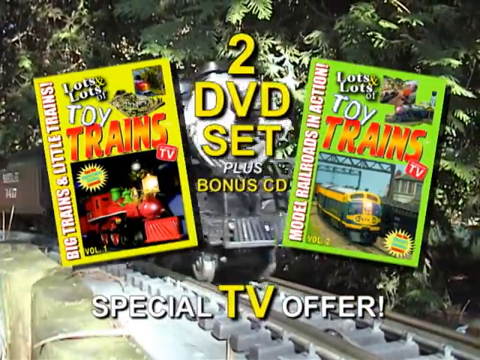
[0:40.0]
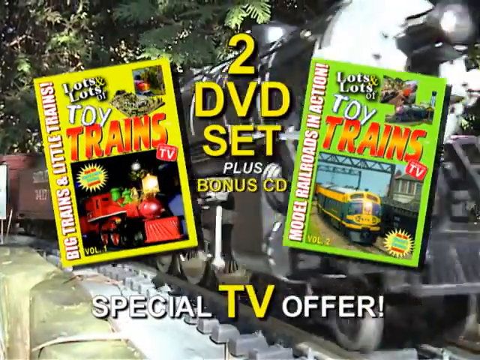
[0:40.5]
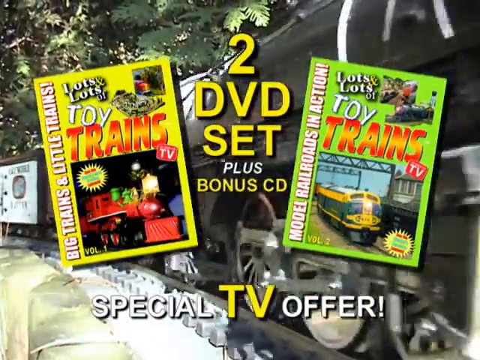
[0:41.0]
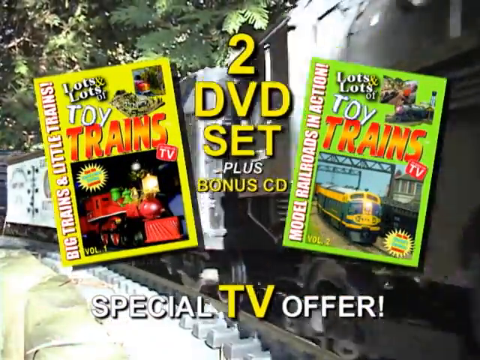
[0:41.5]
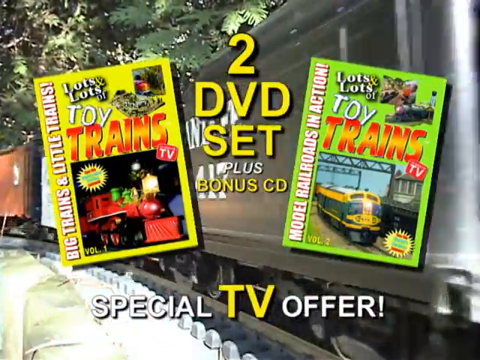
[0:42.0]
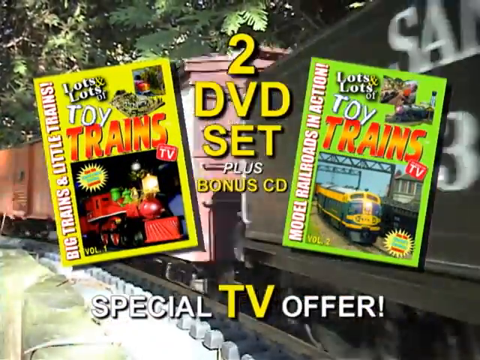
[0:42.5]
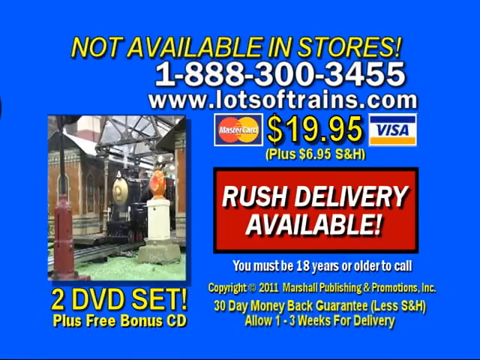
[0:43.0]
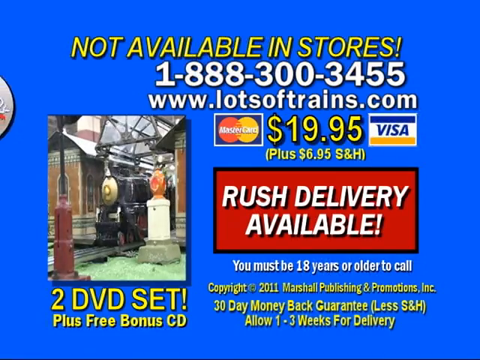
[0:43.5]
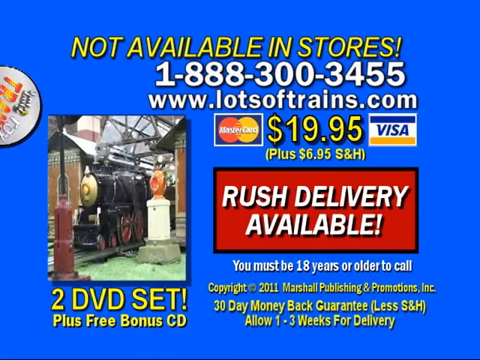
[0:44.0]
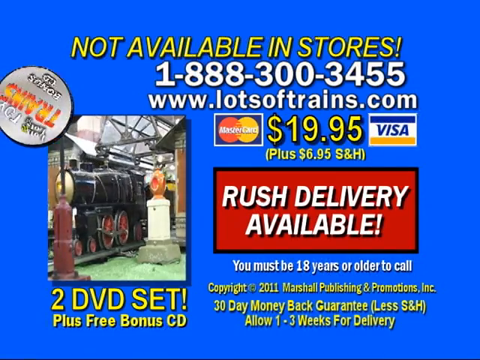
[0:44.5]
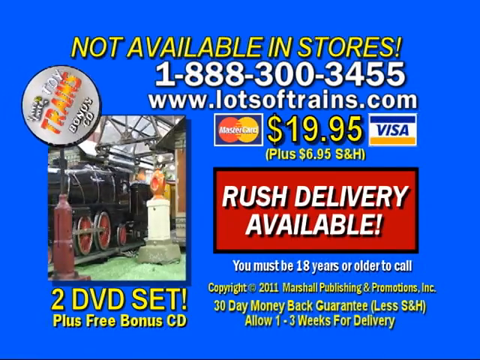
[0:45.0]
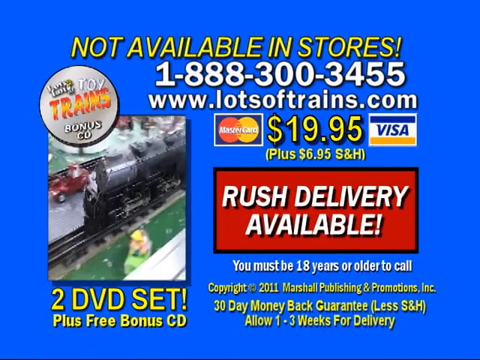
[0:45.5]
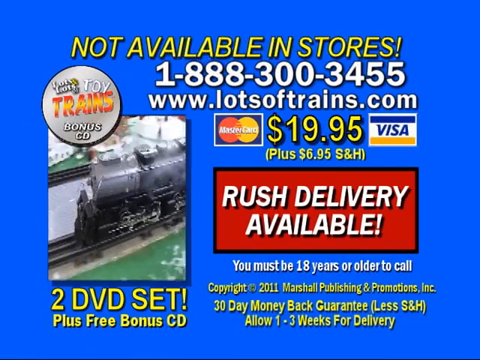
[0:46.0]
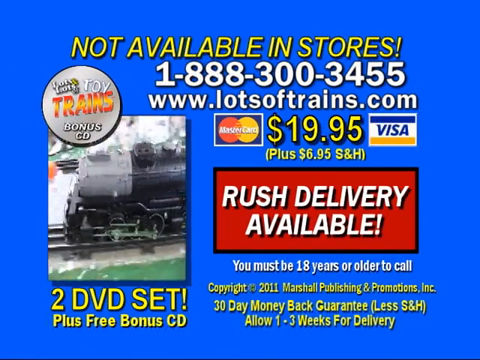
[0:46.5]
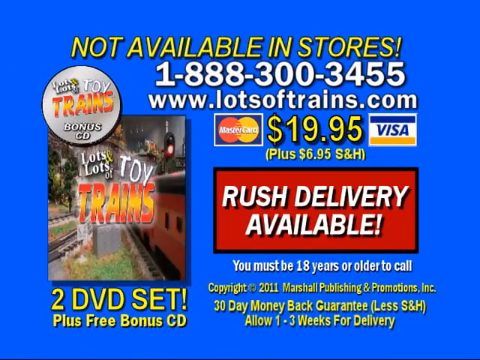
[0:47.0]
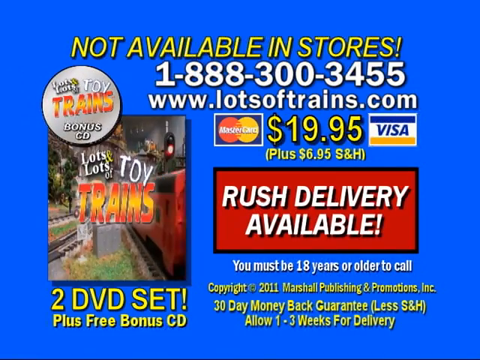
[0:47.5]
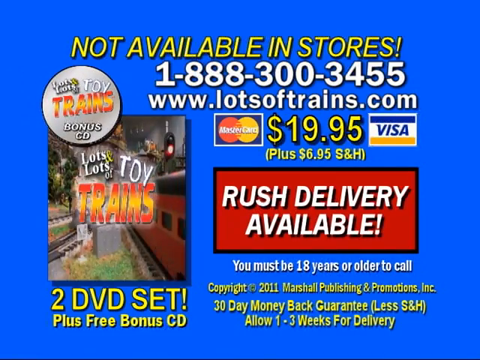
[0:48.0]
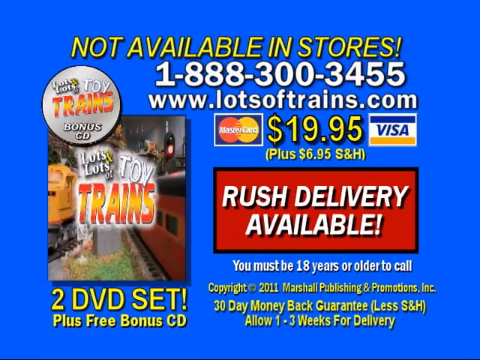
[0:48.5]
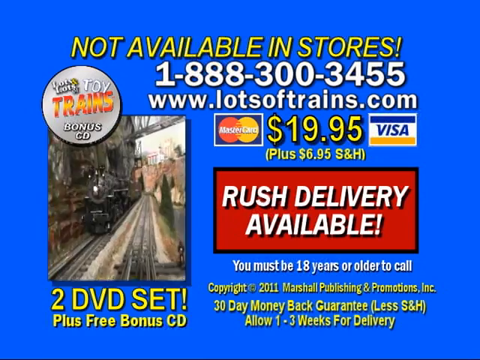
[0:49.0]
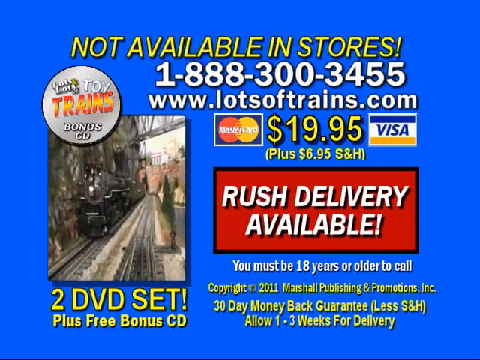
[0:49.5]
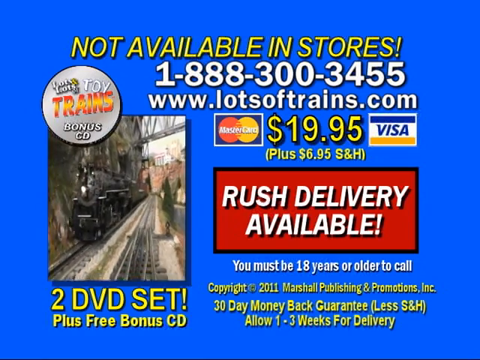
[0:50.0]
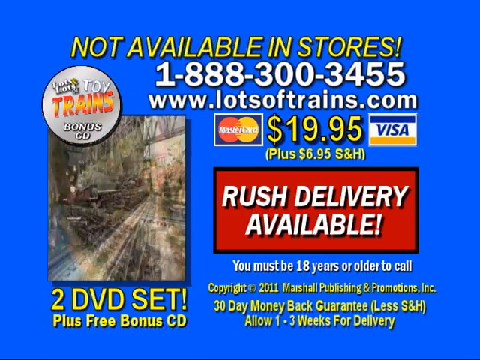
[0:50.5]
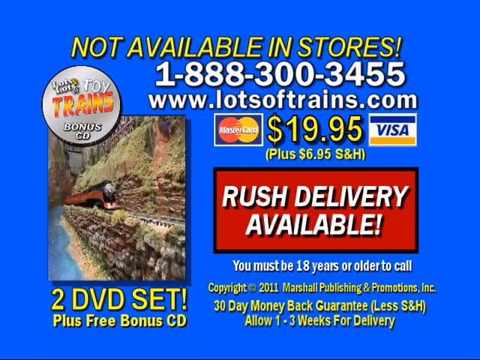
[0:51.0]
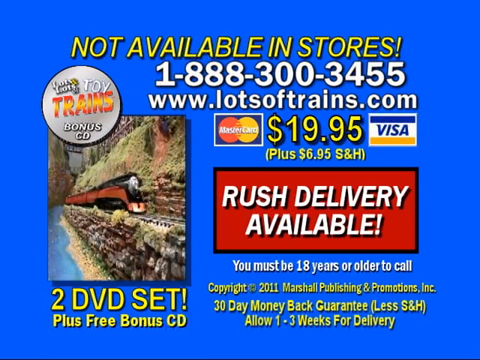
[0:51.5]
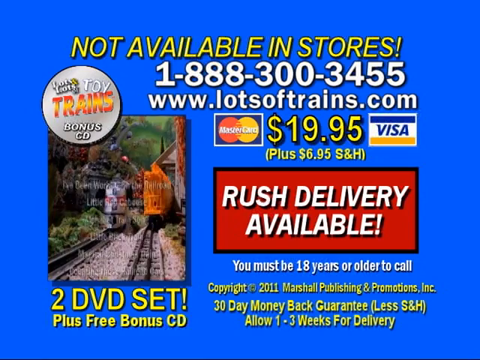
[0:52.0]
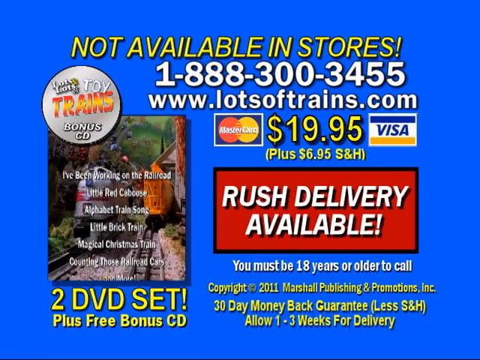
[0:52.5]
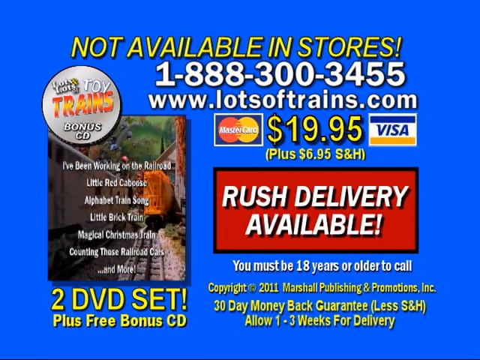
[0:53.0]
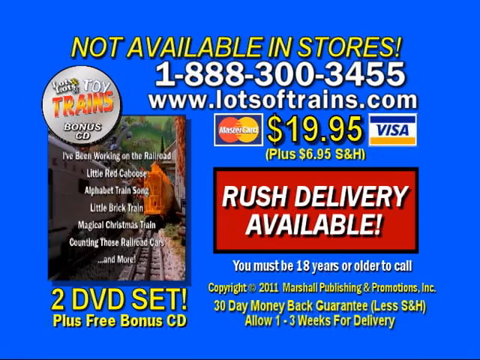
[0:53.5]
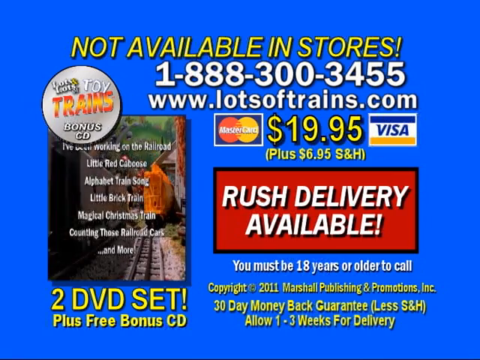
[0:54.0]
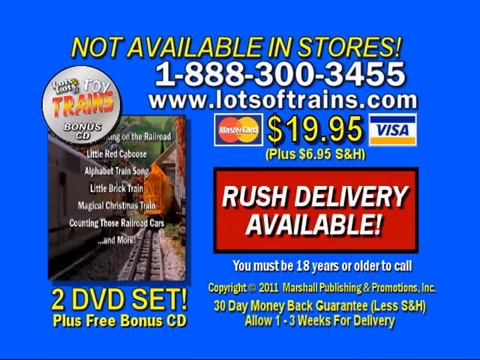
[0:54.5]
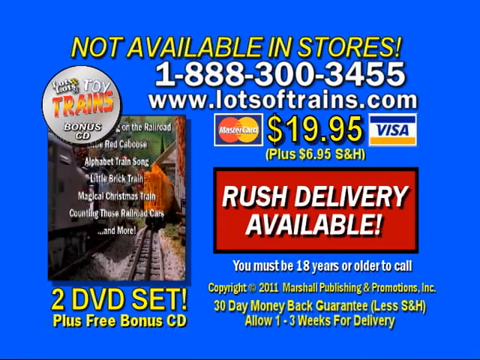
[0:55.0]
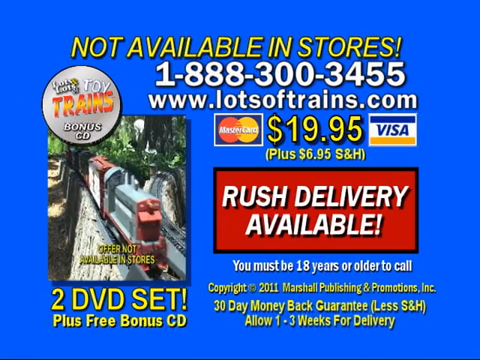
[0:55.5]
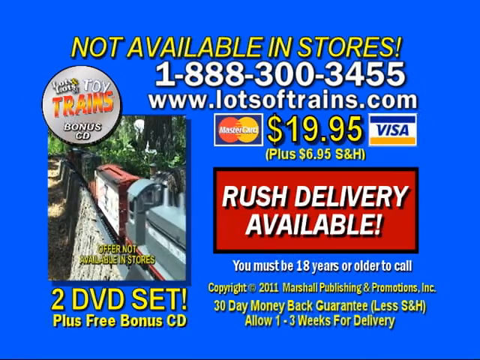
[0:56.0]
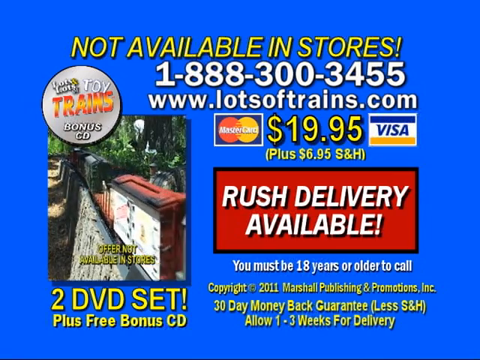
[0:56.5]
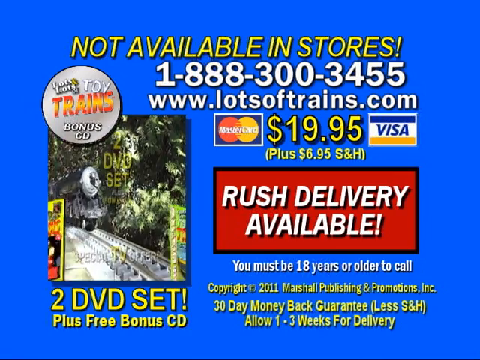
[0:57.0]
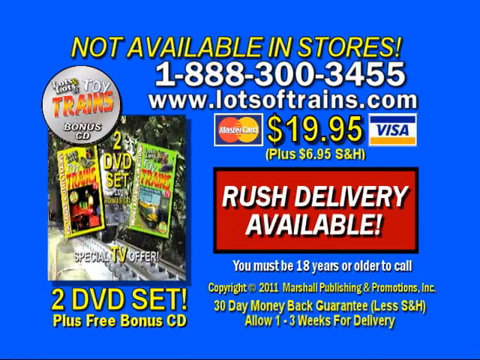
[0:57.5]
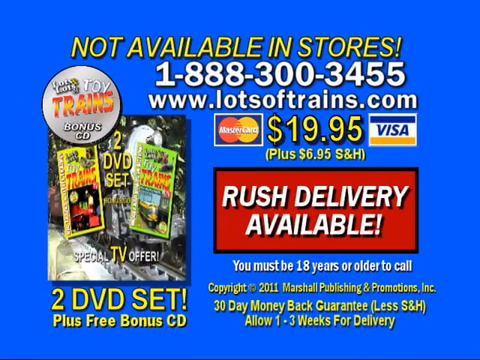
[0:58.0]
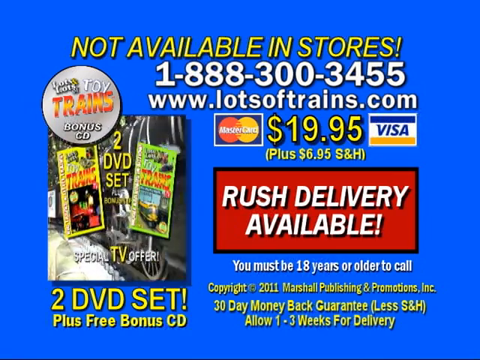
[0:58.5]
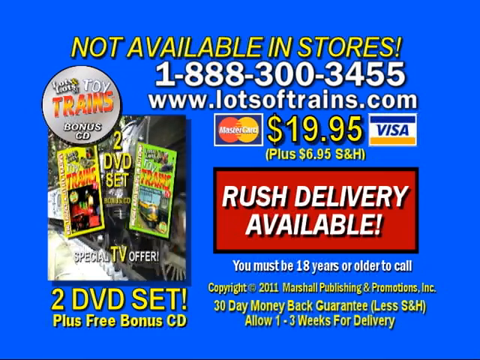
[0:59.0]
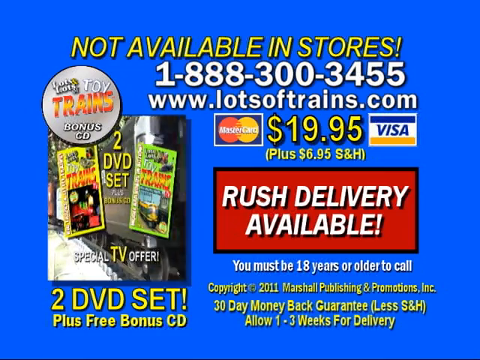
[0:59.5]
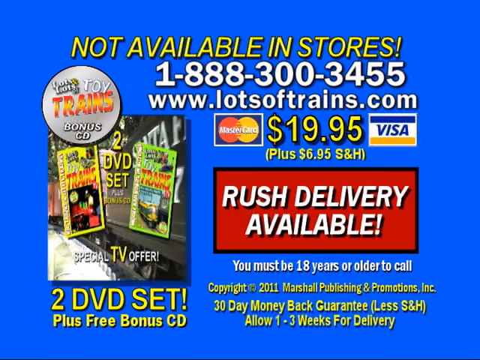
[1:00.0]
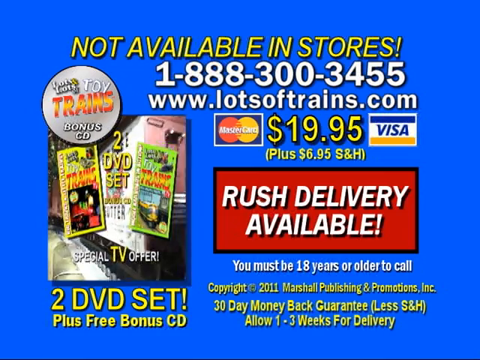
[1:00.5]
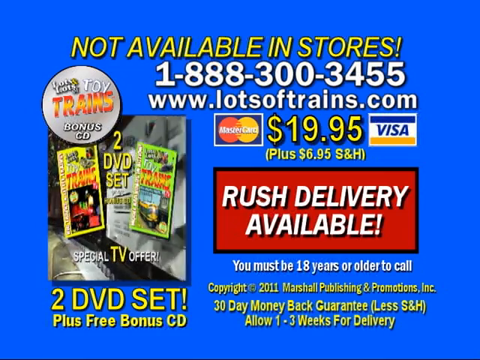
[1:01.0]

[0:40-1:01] A two-DVD set and a bonus CD are shown on the screen with yellow text. On the left is a DVD about toy trains with a yellow cover reading "big trains and little trains"; on the right is a DVD from lots and lots of toy trains with a green cover reading "model railroads in action." In the background an actual black train goes around a track, and the screen says "special tv offer." The video moves to a different screen with a blue background that says "not available in stores" and shows a phone number, a website, Visa and MasterCard logos, and the price. On the left is a picture of a model train with "two dvds set" below it, and in the middle, in what looks like a red box, text reads "rush delivery available." Then something like an image of a bonus CD rolls in from the side, and "lots and lots of toys and trains" appears. In the image on the left, a small video shows the different toy trains, basically repeating the video shown earlier, including a list of train-themed songs and the two-DVD set.